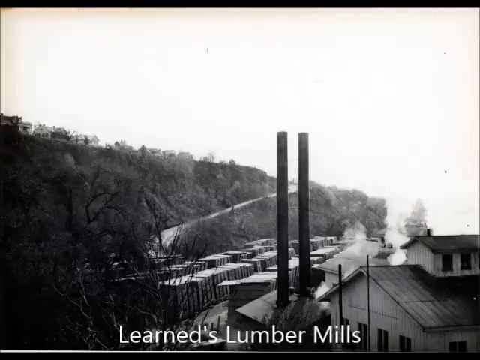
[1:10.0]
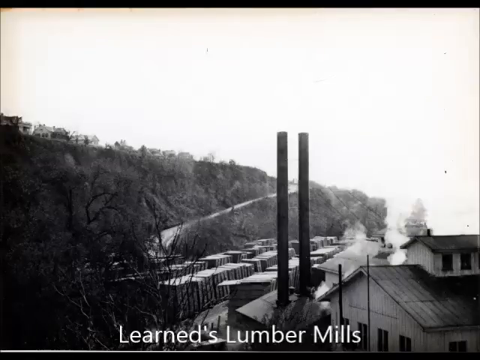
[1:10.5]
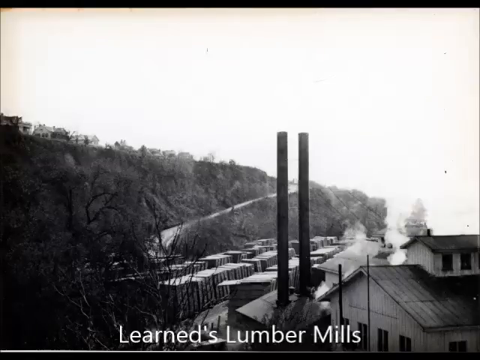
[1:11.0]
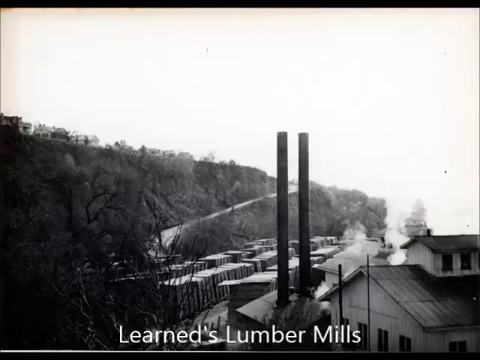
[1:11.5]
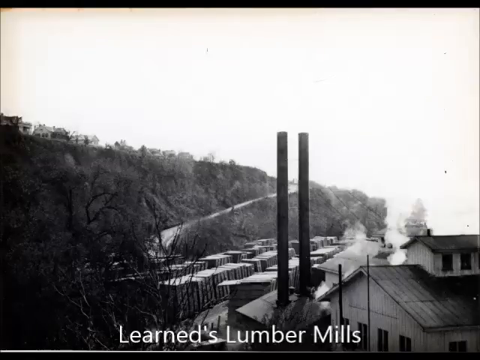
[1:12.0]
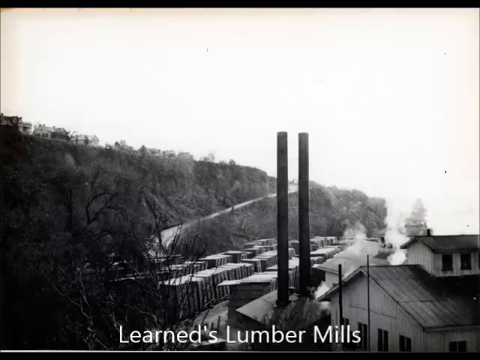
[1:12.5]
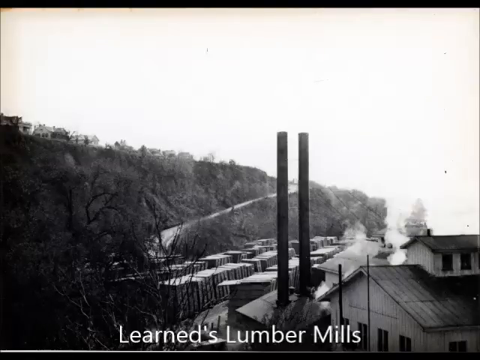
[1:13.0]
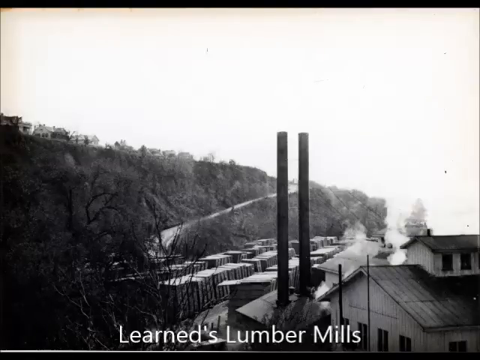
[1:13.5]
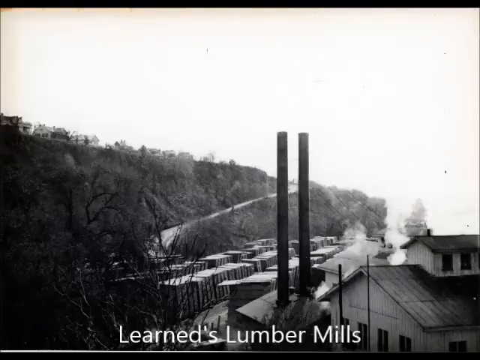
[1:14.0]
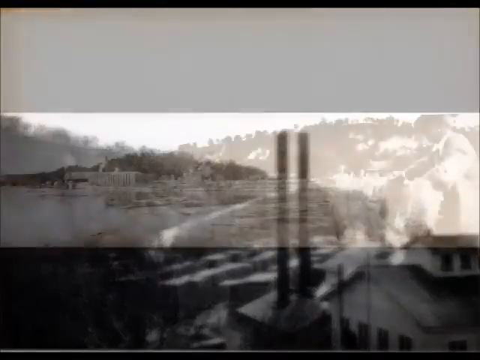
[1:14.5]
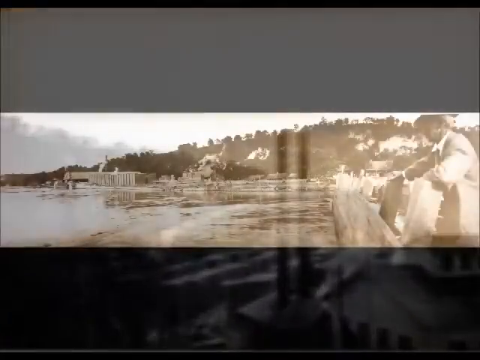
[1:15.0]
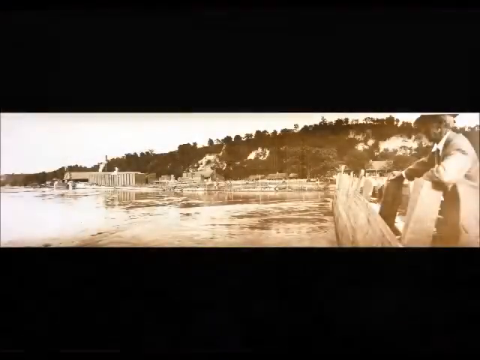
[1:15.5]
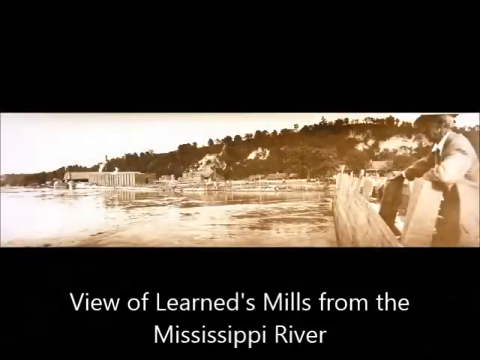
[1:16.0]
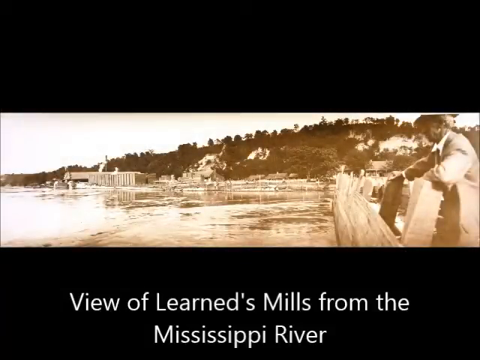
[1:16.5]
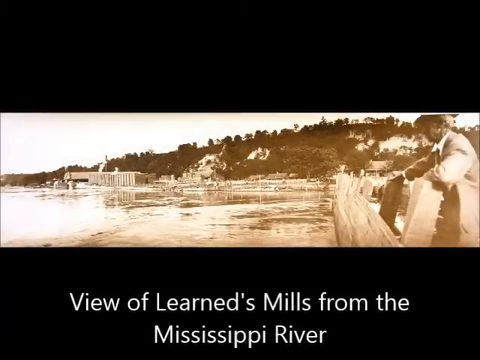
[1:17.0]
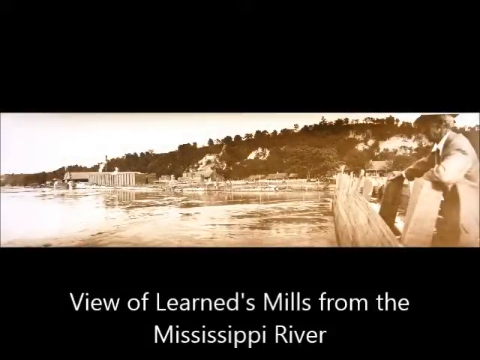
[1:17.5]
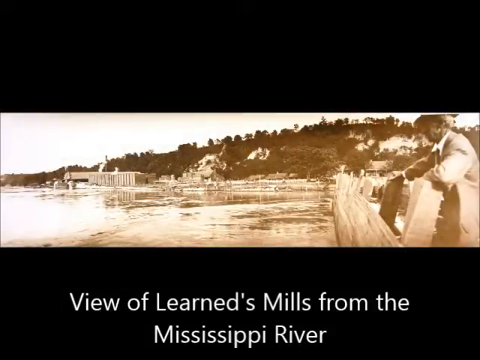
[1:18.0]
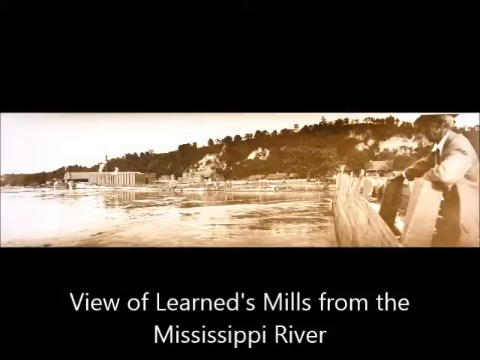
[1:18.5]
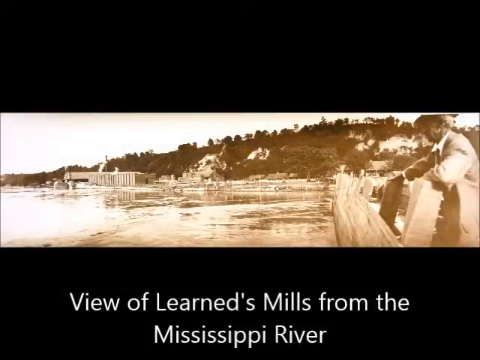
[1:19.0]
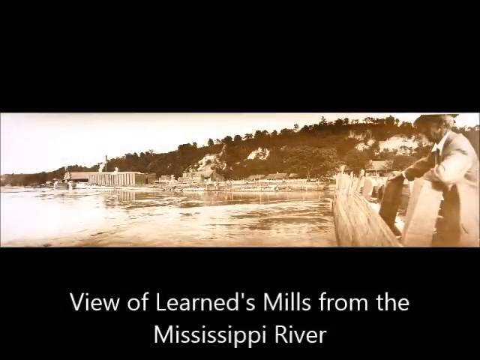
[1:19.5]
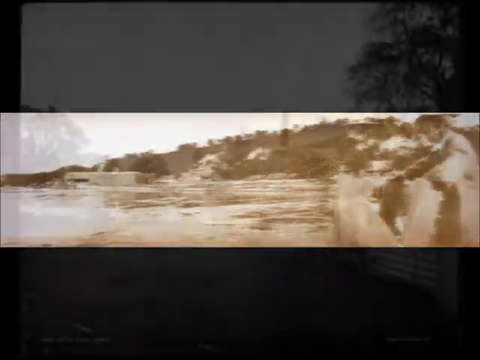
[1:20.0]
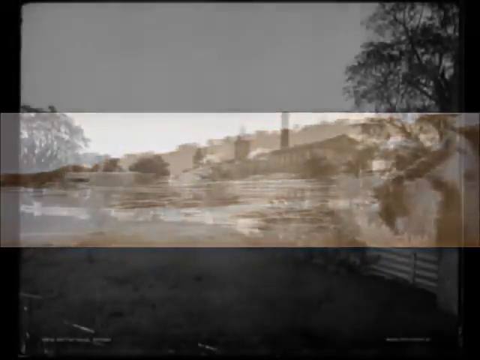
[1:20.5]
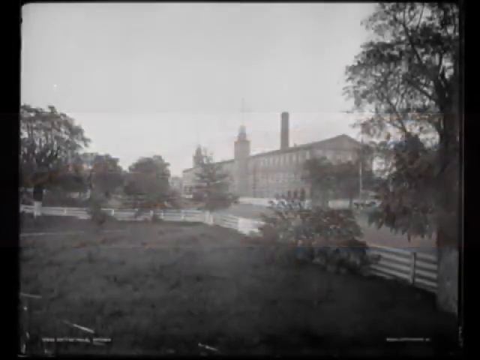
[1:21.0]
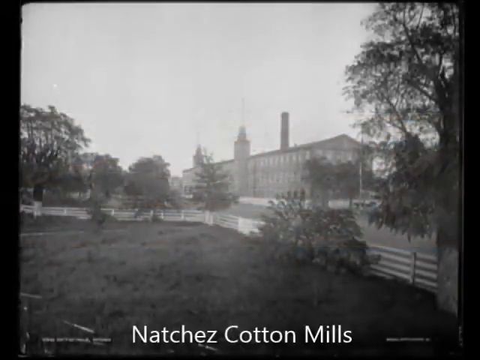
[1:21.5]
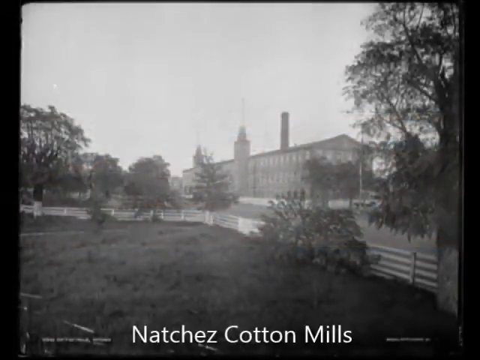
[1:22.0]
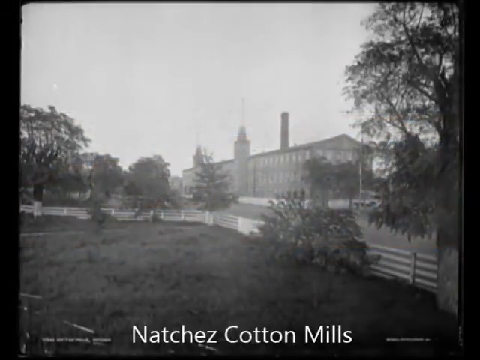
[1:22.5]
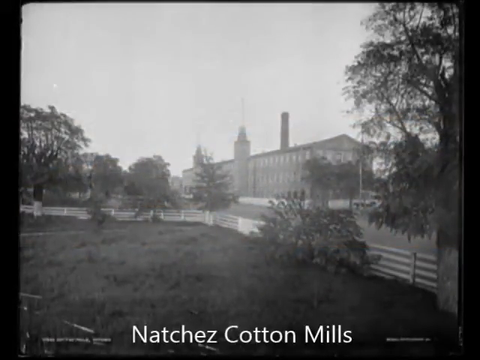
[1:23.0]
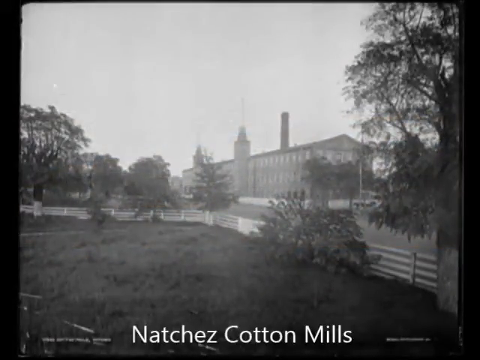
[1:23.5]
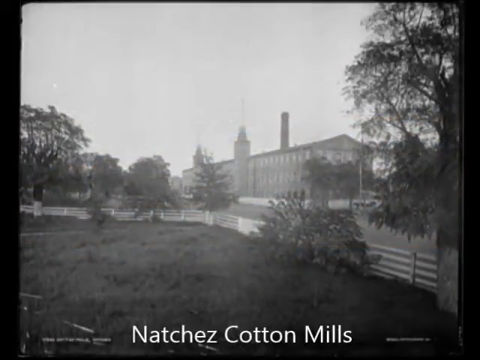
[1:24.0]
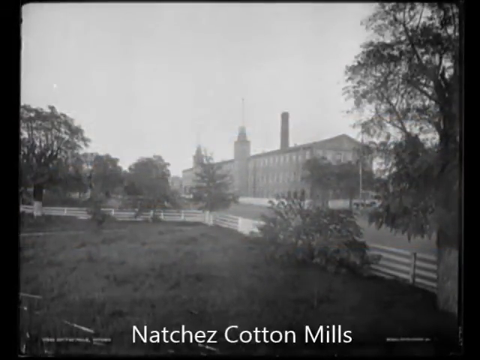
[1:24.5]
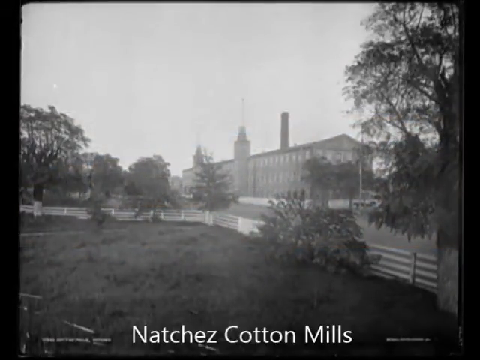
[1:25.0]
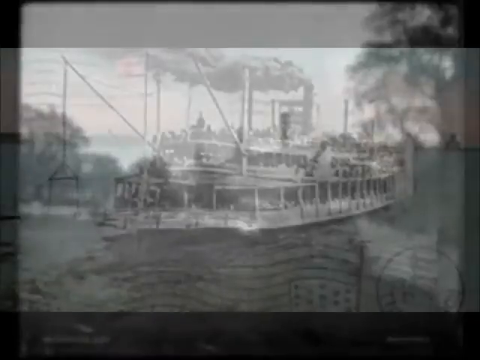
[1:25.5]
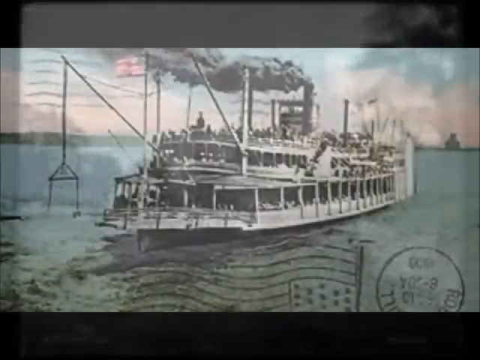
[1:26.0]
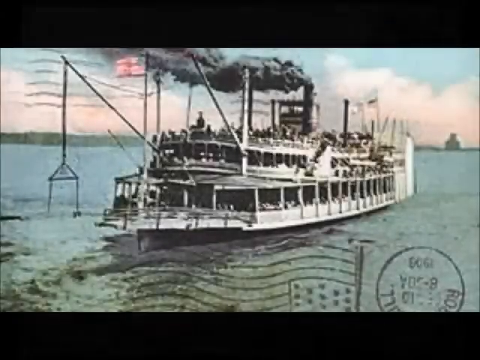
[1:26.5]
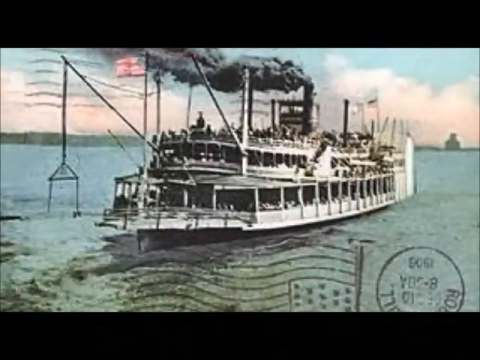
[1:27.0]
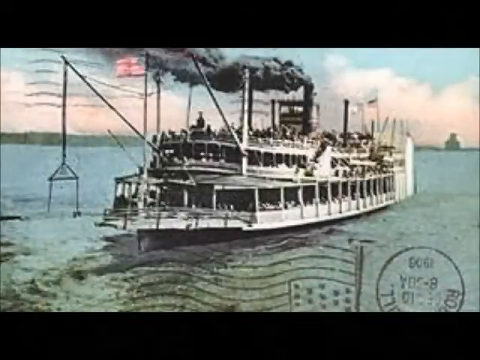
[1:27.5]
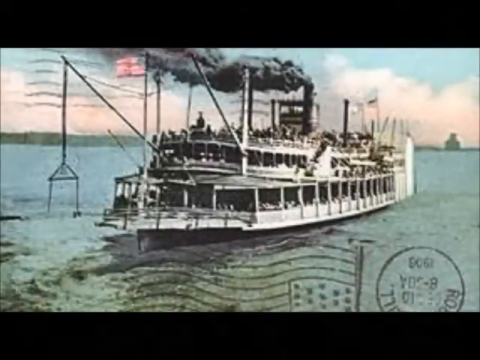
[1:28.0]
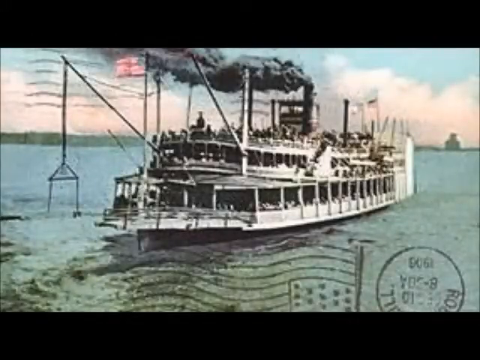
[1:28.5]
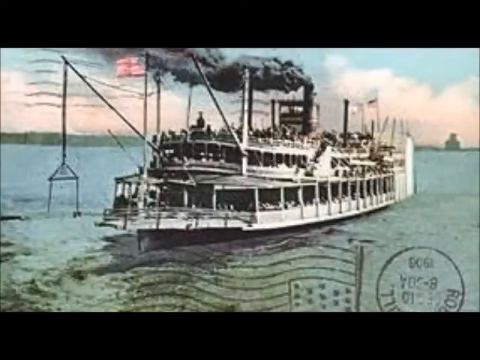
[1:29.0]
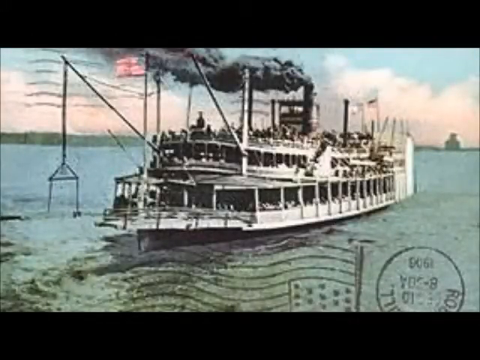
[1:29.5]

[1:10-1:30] A black and white picture shows a lumber mill with two big smokestacks. A makeshift road leads out of the mill, apparently on the side of a mountain, with several homes at the top of the mountain and all the wood being collected. Next is a picture that looks like the Mississippi River, seemingly also in black and white. An older gentleman appears to be on a boat, the river looks quite turbulent, and a mountain with some trees is in the background. Then a picture of a cotton mill shows a big building with one big smokestack, fences dividing areas into sections, trees all around and grass; no cotton is visible. Finally a picture shows a two-tier steamboat sitting in the water, with a lot of black steam coming out of the top of one of its smokestacks.